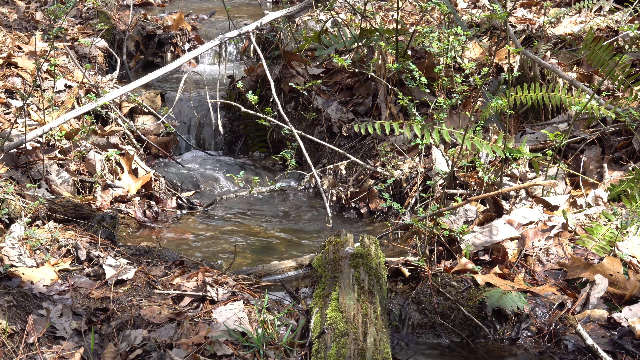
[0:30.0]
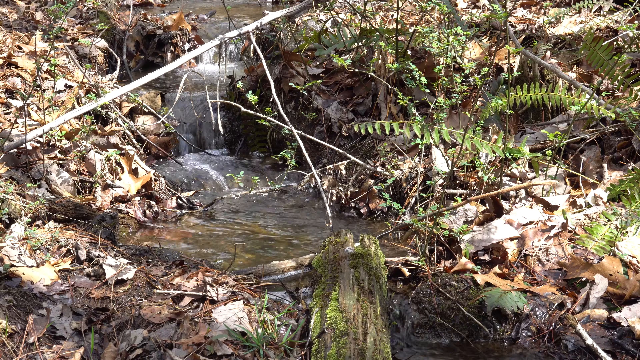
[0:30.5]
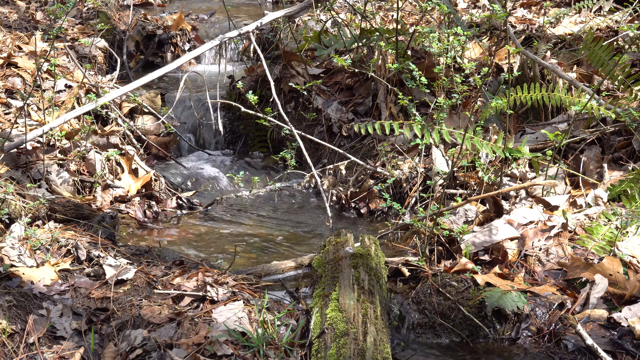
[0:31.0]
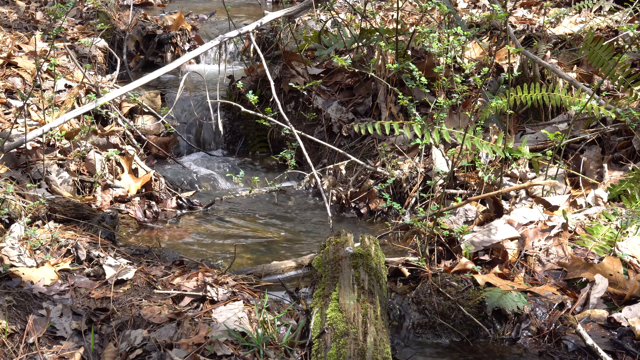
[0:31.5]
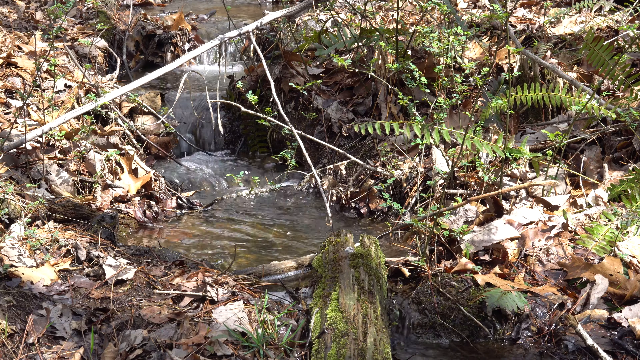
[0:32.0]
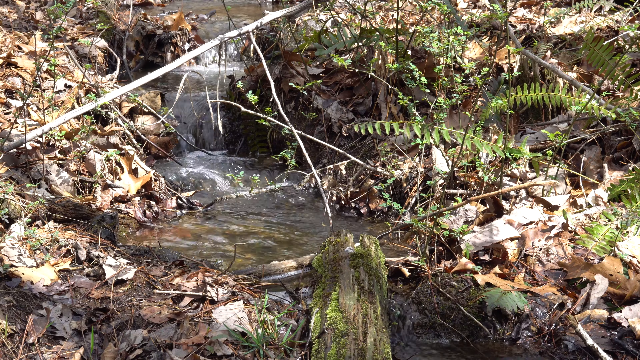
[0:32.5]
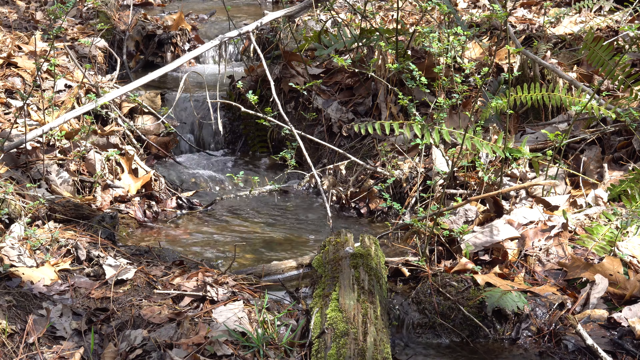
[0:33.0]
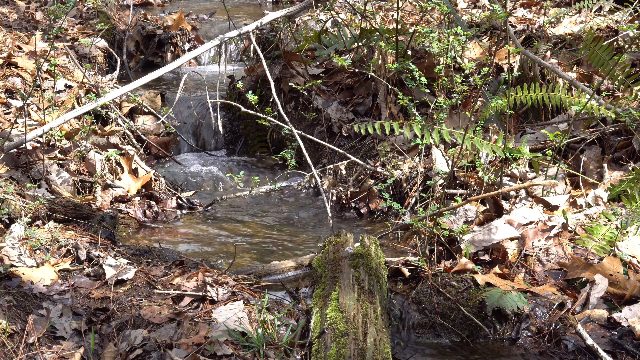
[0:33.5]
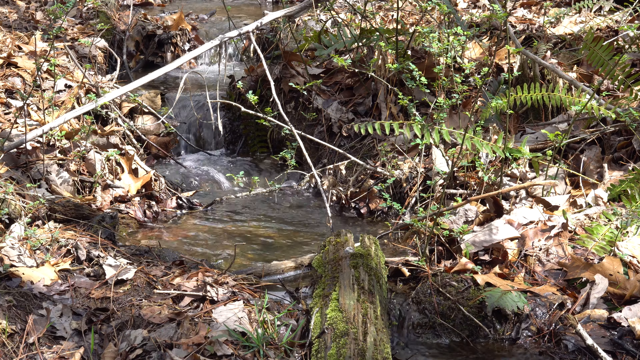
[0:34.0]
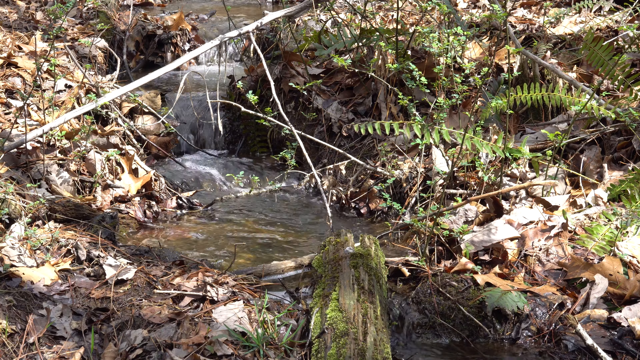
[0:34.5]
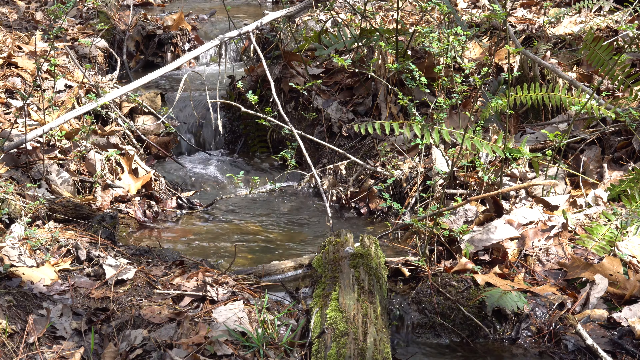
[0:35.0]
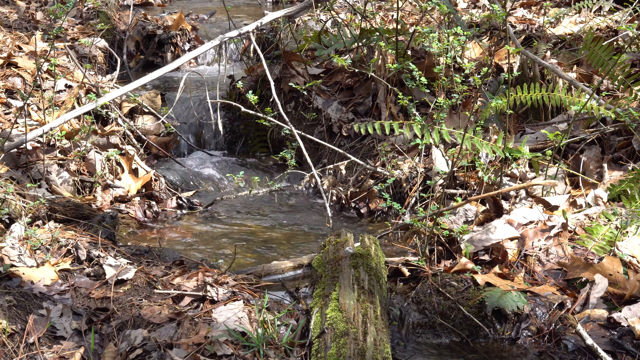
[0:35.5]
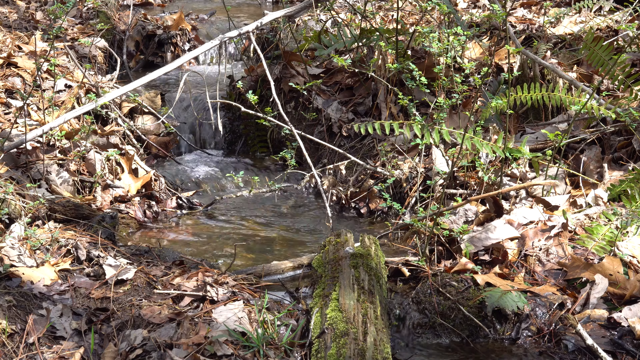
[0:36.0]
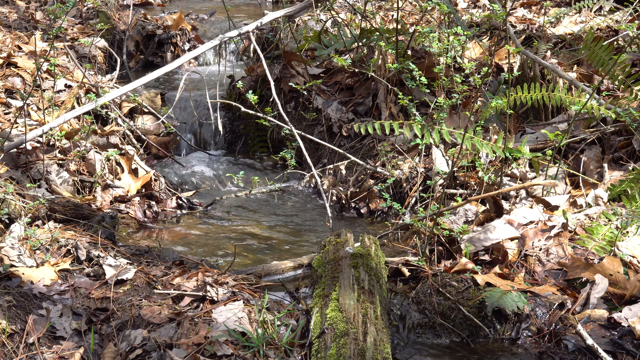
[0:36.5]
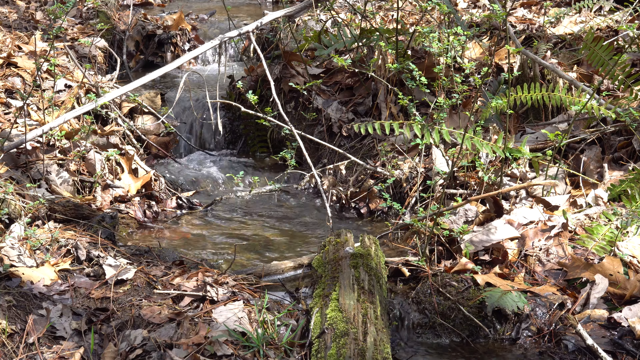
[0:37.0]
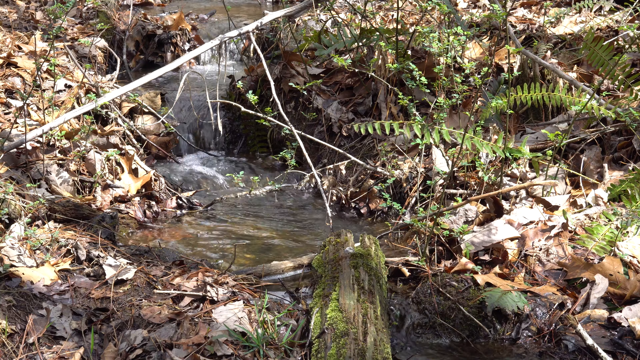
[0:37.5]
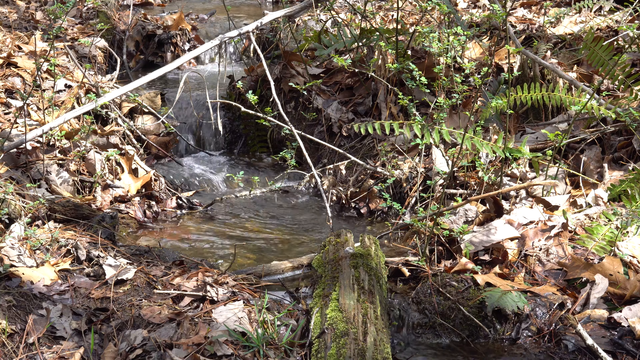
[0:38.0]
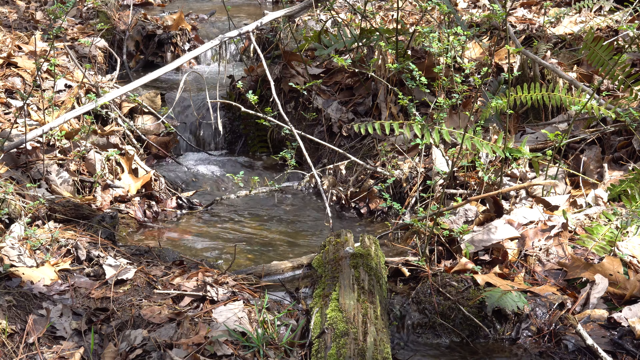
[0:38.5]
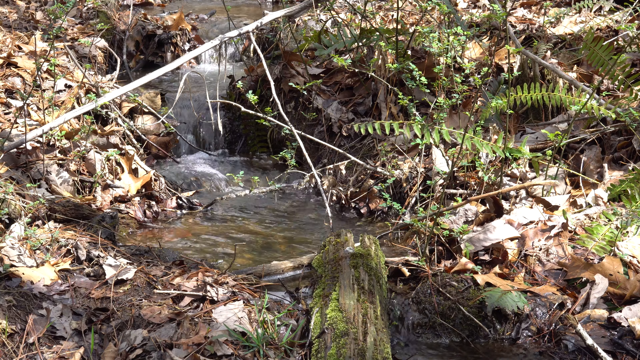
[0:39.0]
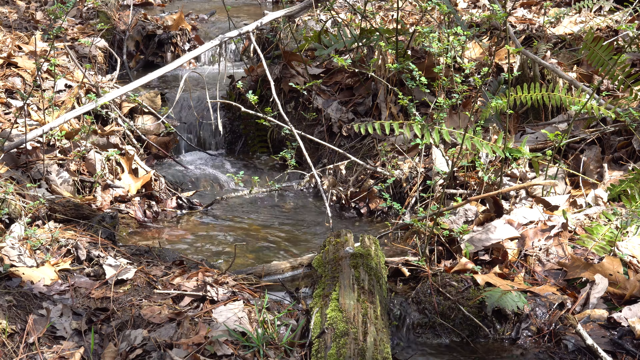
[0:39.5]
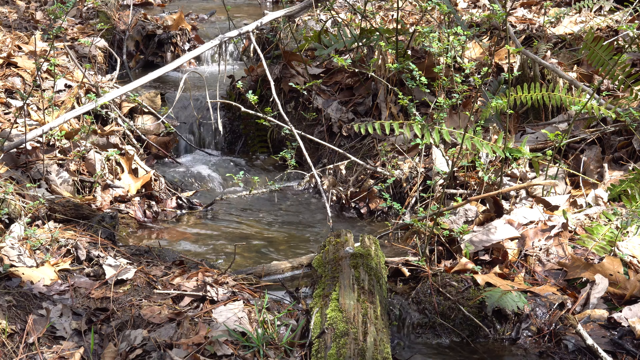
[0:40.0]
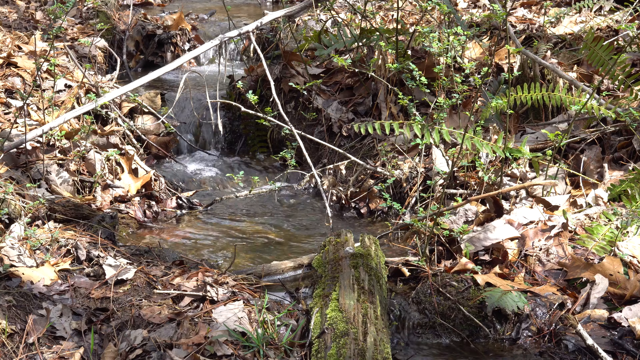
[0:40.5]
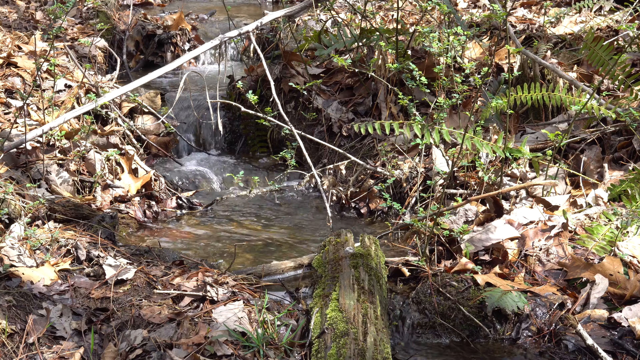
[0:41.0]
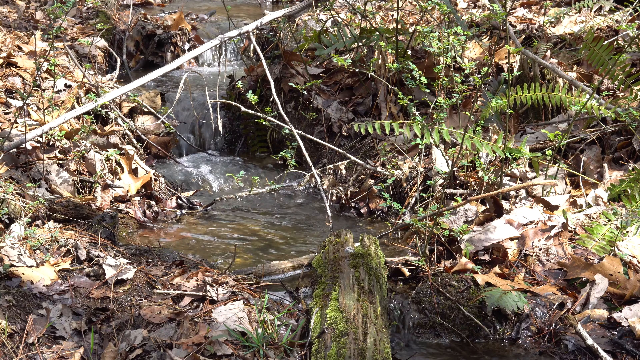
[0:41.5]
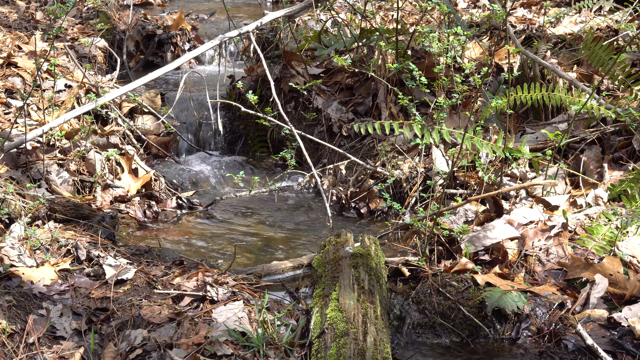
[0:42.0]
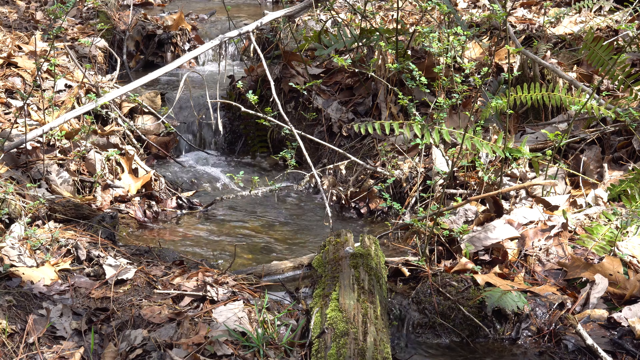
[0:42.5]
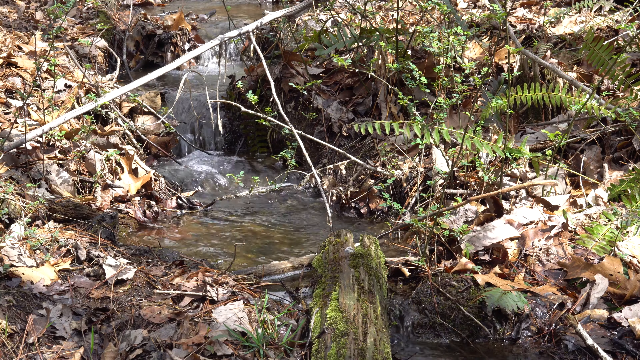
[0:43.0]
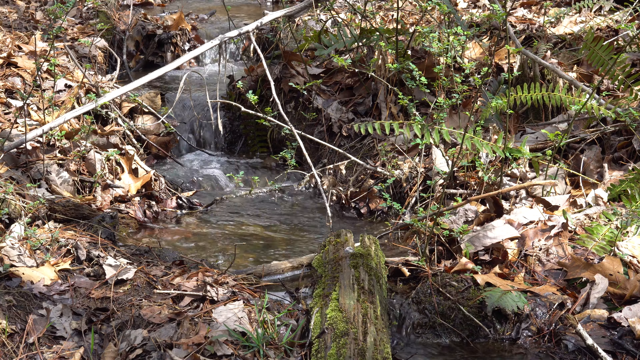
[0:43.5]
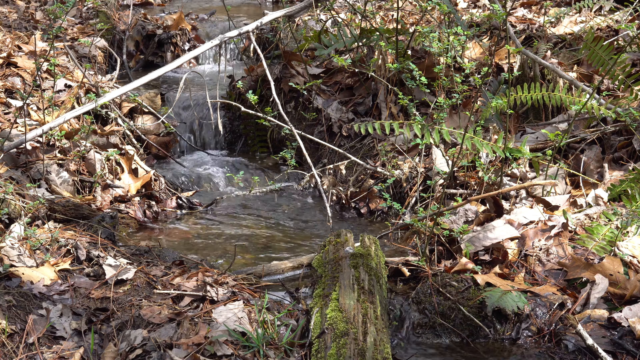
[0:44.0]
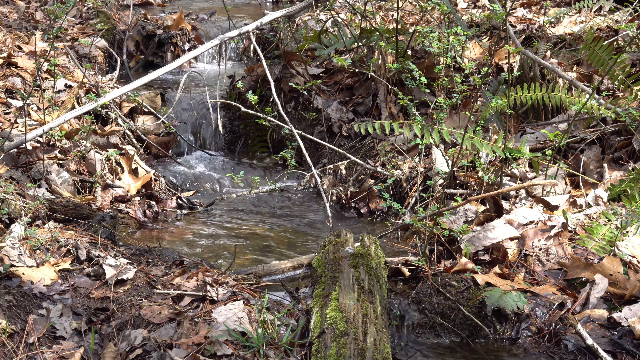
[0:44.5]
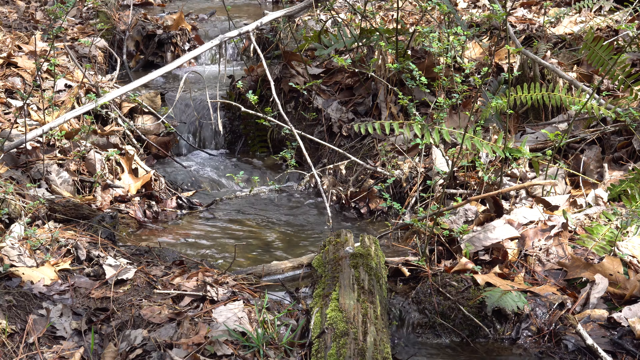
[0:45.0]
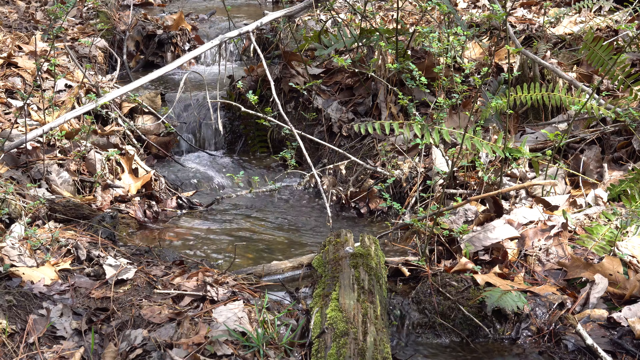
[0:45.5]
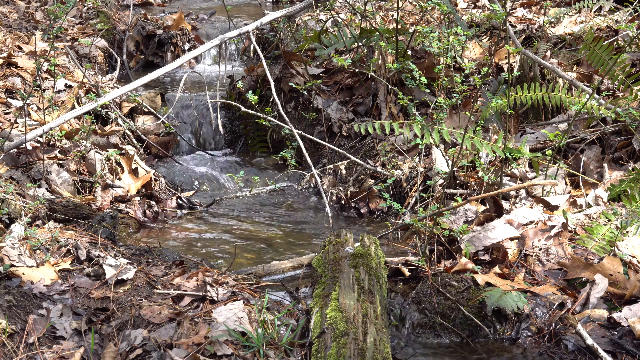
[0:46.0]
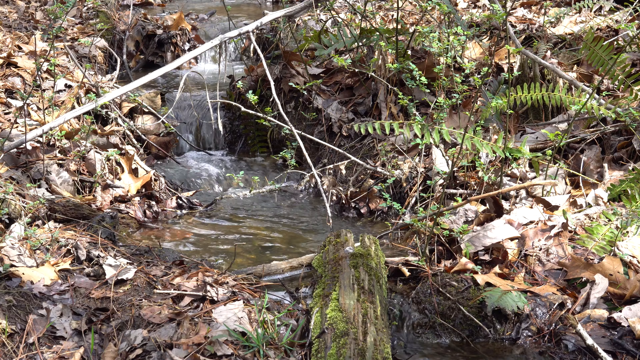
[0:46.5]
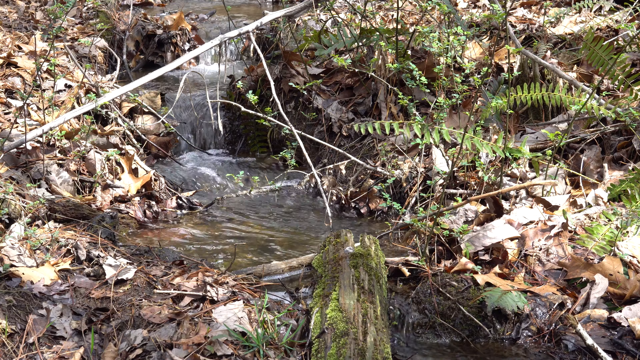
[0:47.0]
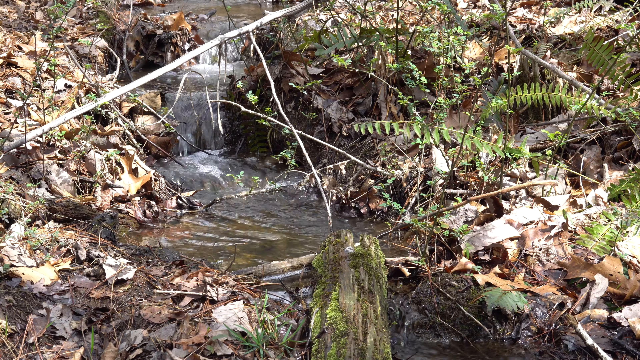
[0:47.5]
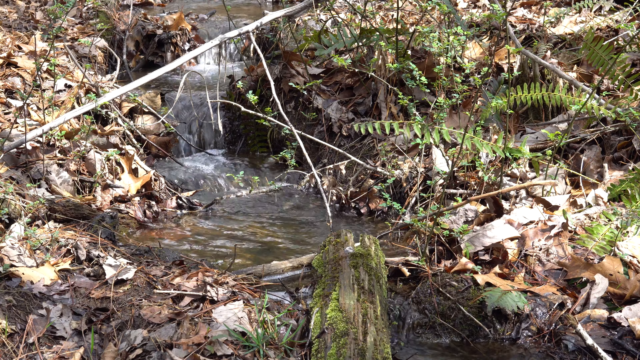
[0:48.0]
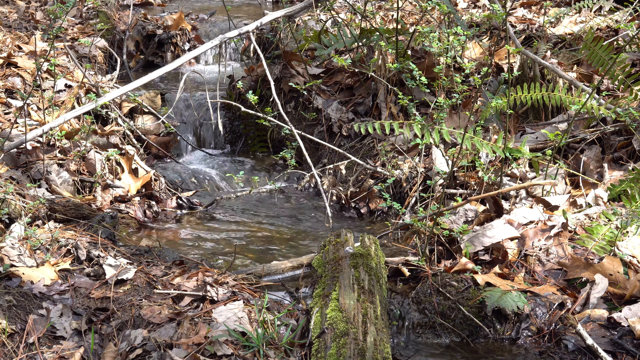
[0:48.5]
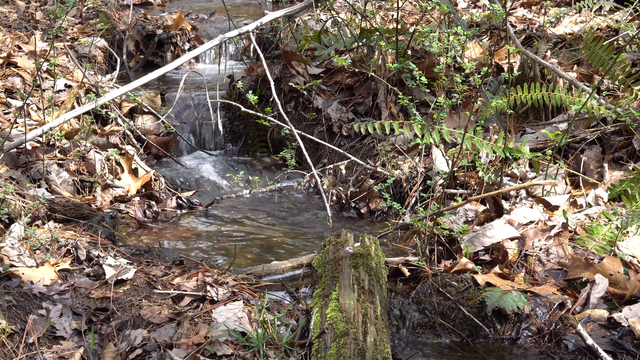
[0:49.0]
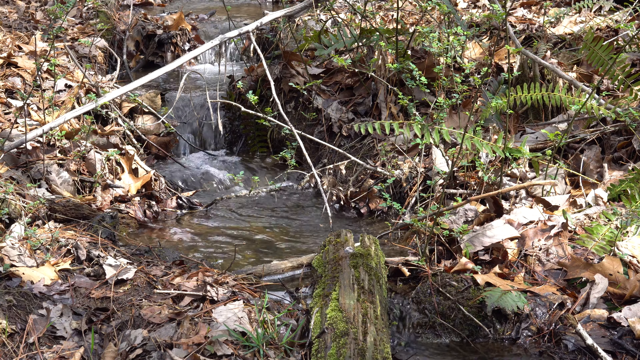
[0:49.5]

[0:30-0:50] The water is still flowing. The man seen earlier no longer appears; the camera stays on the natural scenery without him.